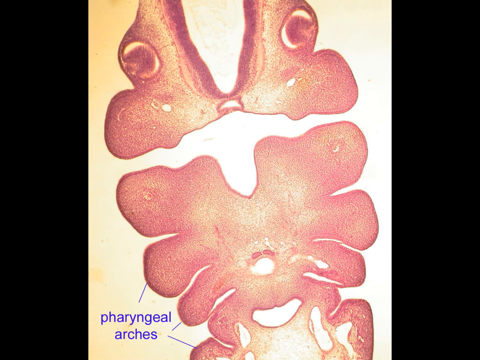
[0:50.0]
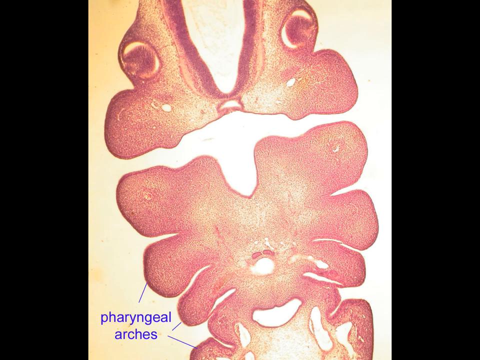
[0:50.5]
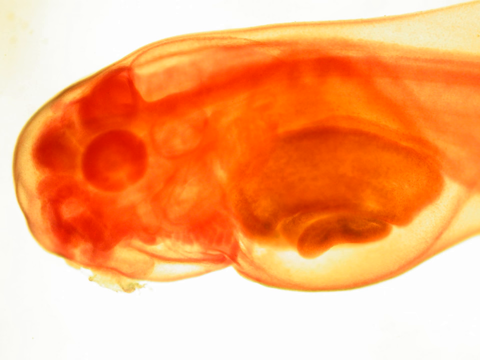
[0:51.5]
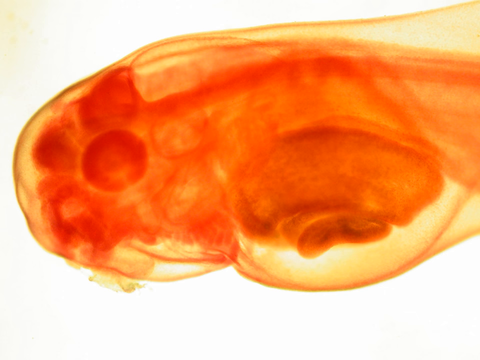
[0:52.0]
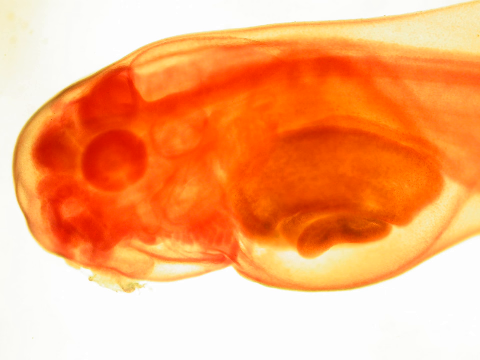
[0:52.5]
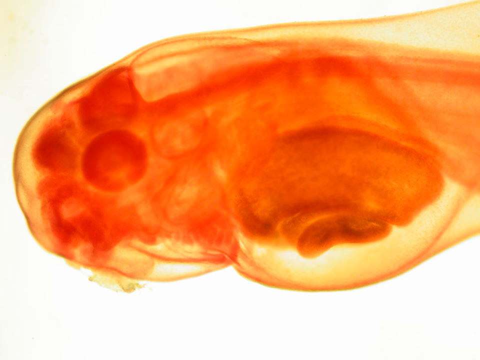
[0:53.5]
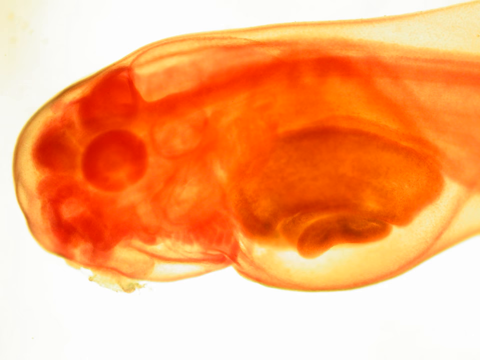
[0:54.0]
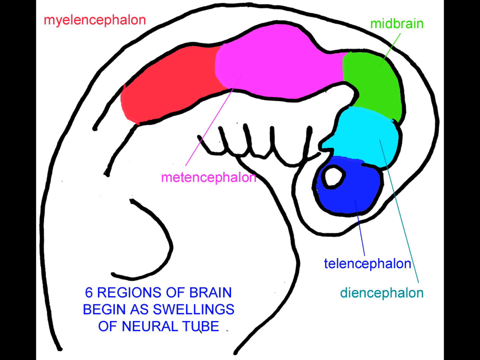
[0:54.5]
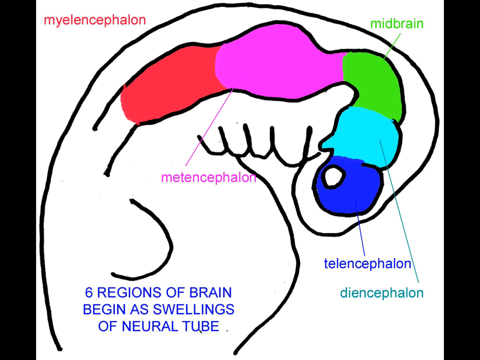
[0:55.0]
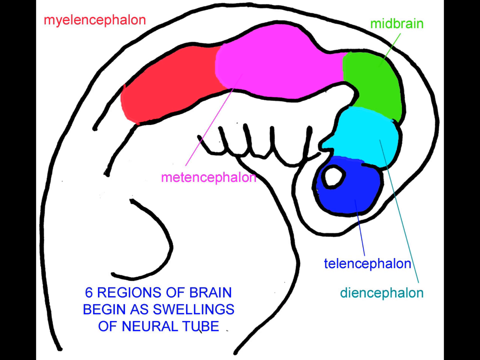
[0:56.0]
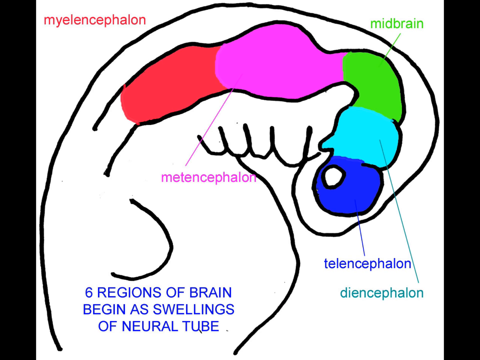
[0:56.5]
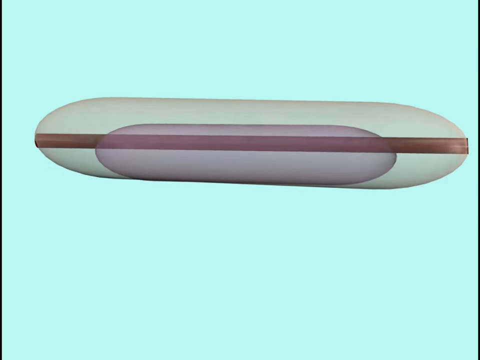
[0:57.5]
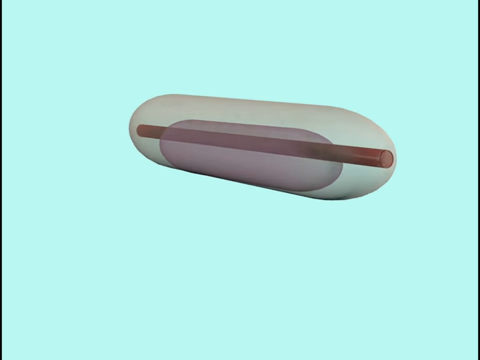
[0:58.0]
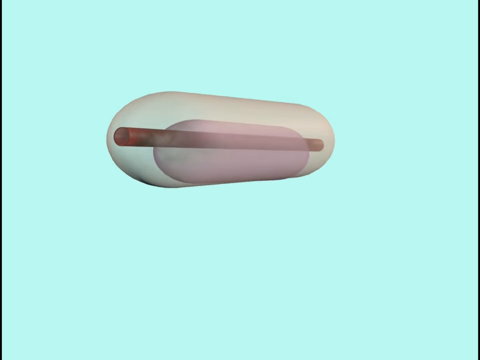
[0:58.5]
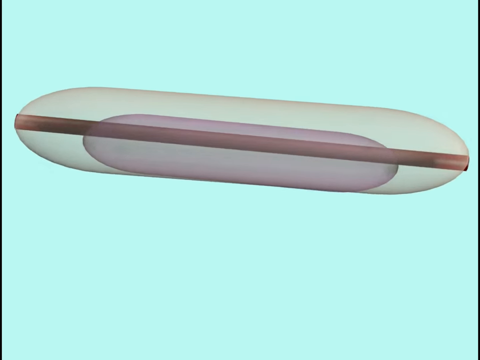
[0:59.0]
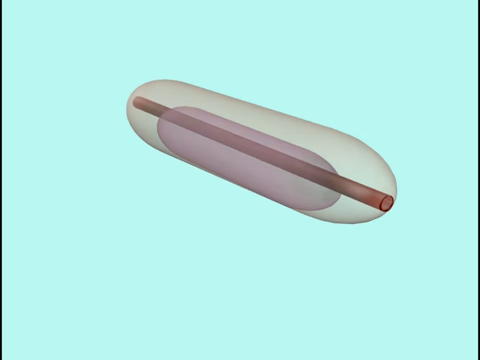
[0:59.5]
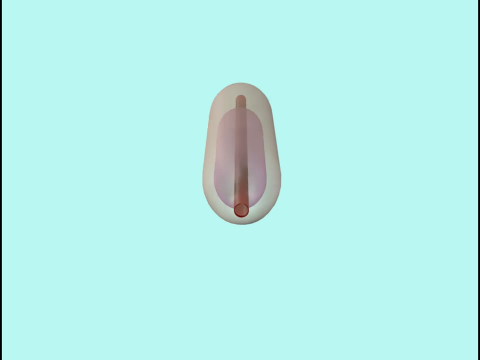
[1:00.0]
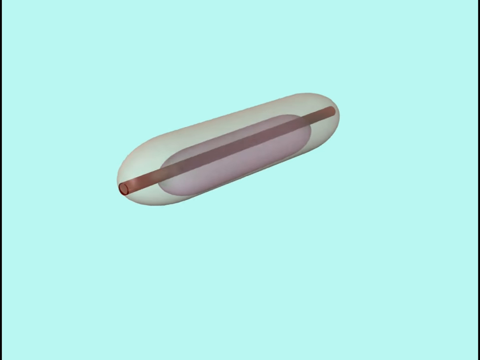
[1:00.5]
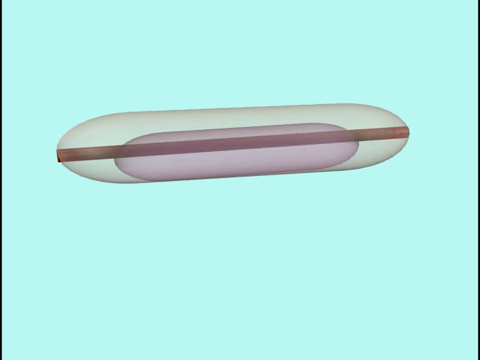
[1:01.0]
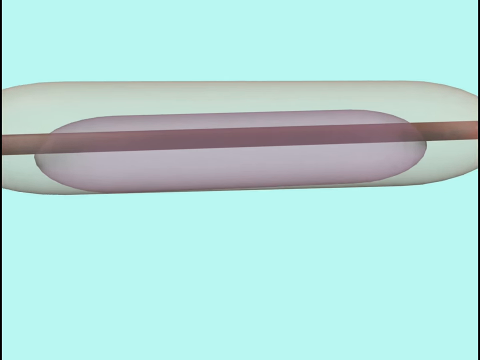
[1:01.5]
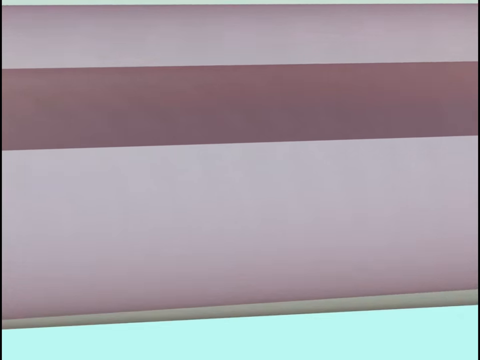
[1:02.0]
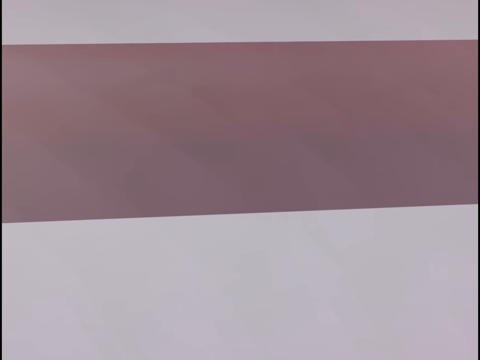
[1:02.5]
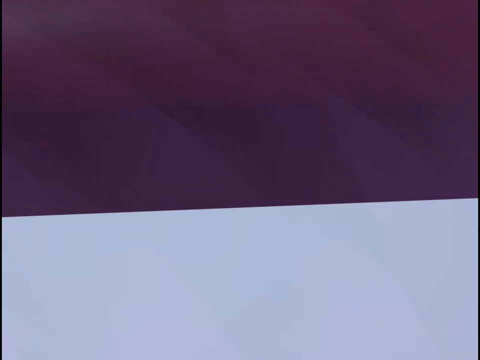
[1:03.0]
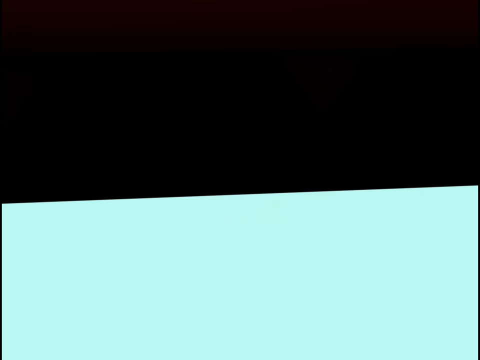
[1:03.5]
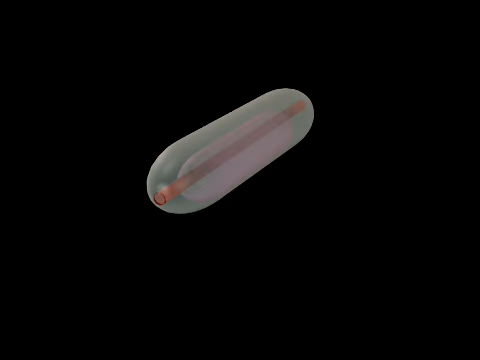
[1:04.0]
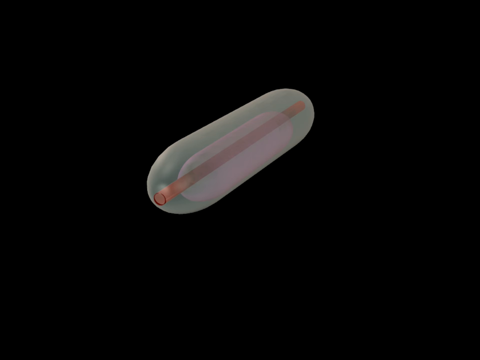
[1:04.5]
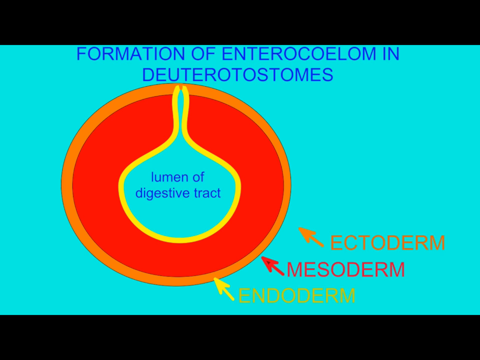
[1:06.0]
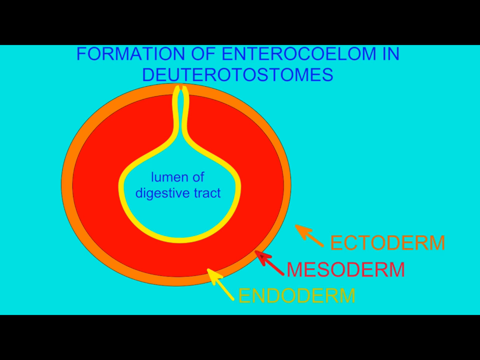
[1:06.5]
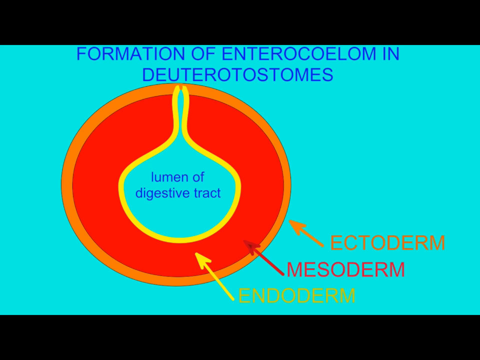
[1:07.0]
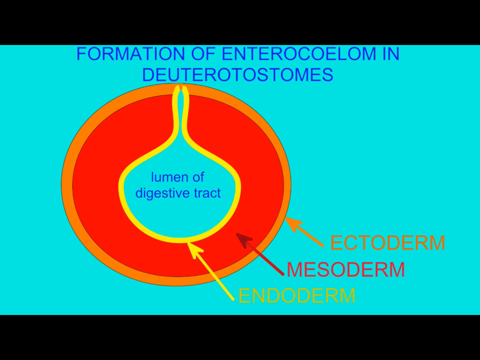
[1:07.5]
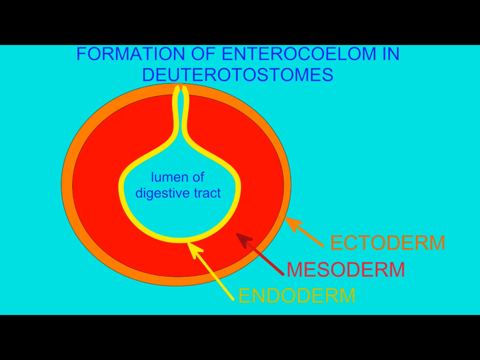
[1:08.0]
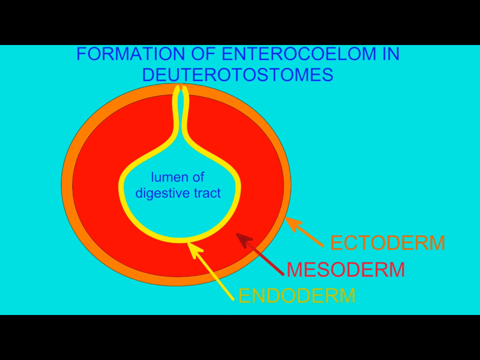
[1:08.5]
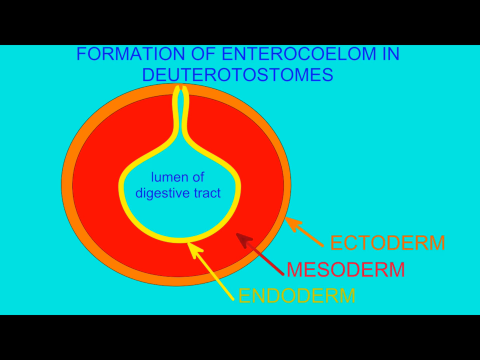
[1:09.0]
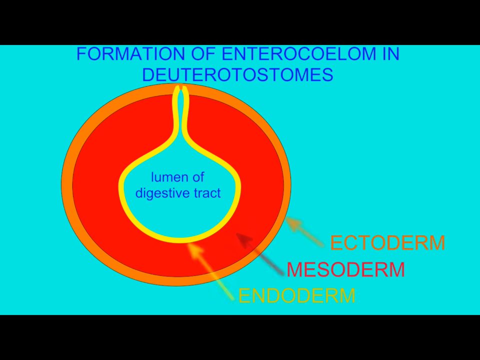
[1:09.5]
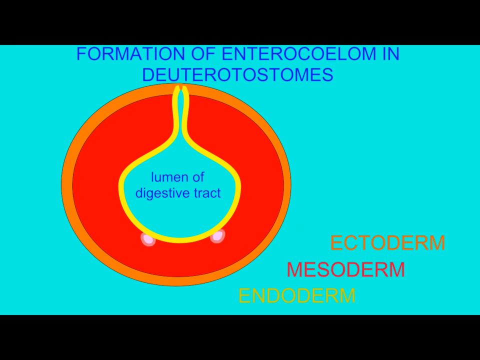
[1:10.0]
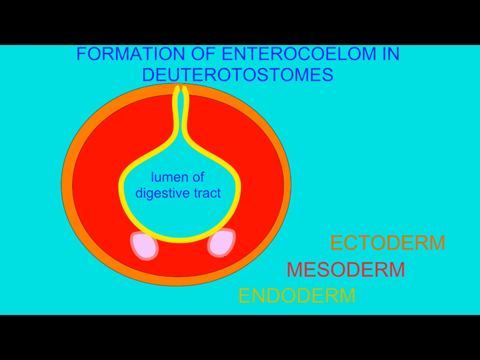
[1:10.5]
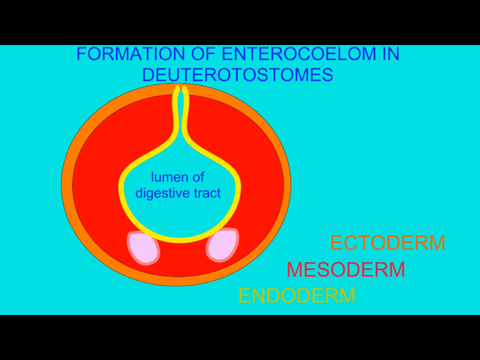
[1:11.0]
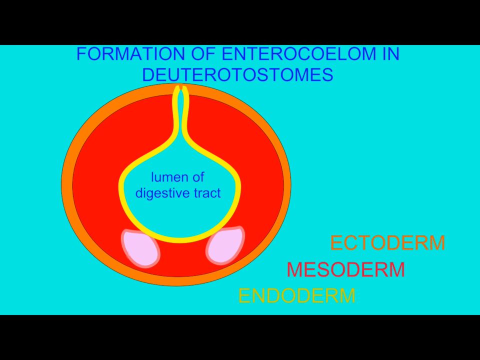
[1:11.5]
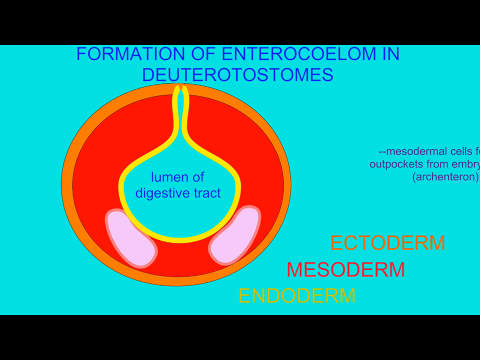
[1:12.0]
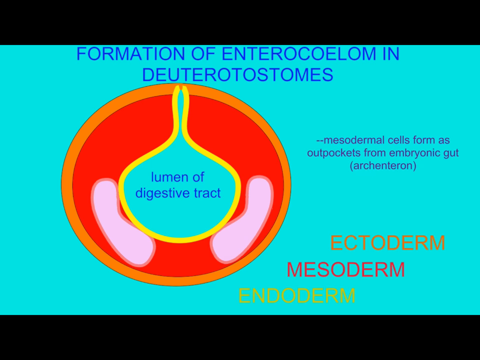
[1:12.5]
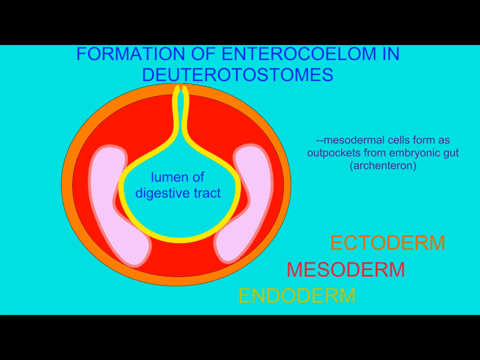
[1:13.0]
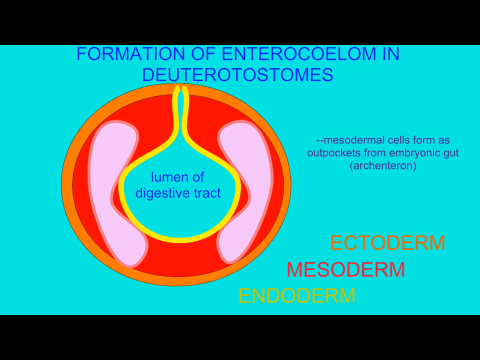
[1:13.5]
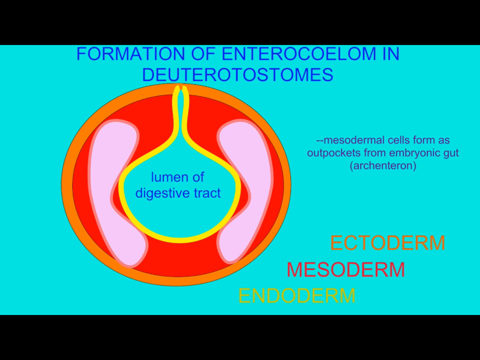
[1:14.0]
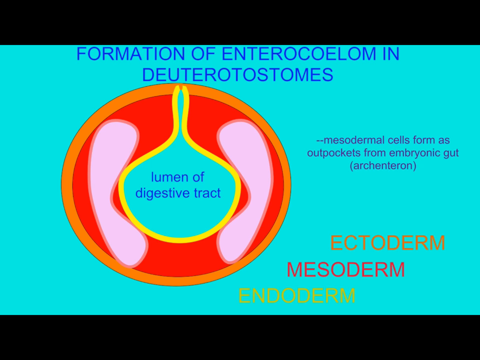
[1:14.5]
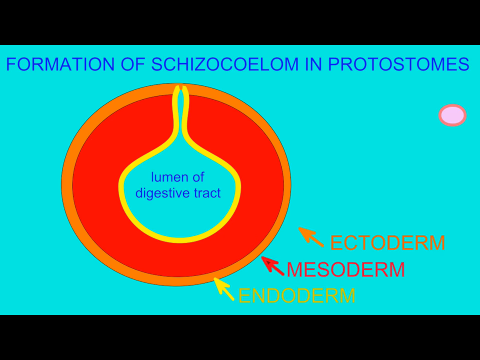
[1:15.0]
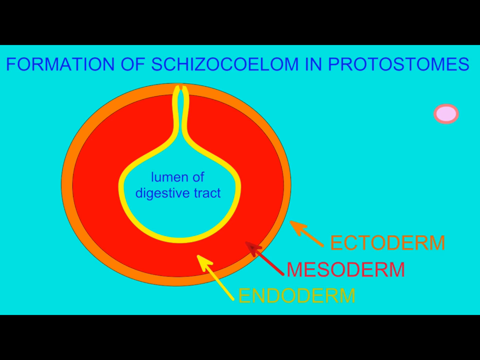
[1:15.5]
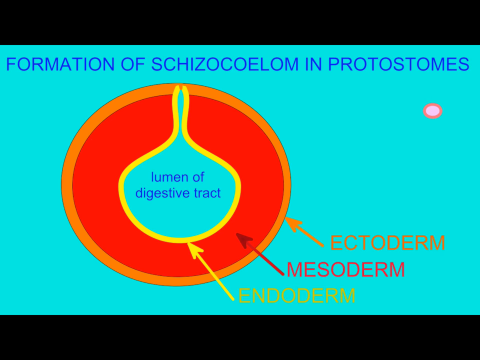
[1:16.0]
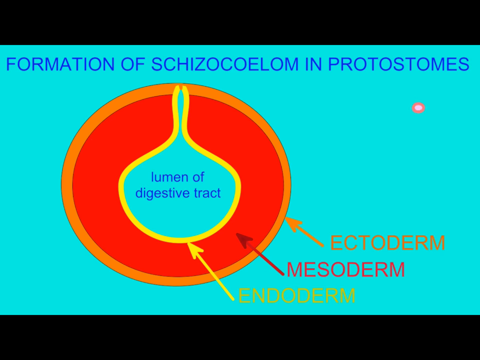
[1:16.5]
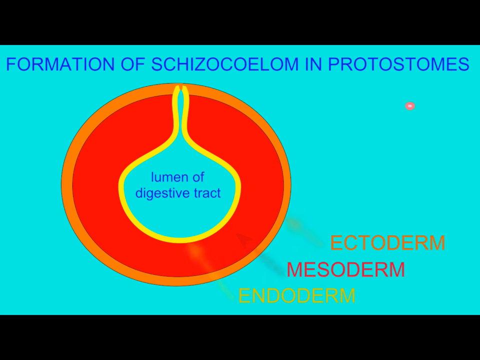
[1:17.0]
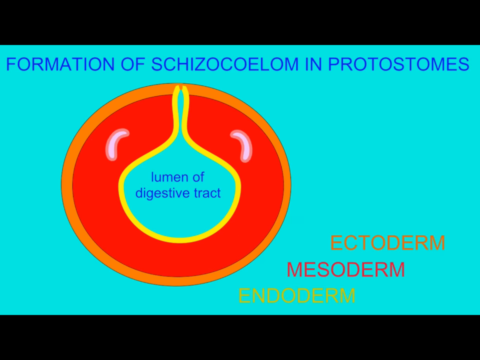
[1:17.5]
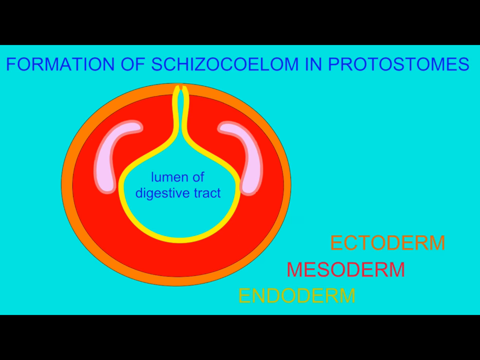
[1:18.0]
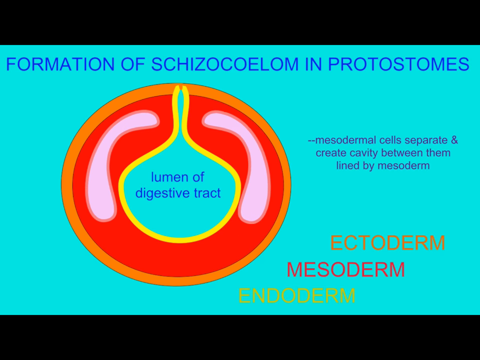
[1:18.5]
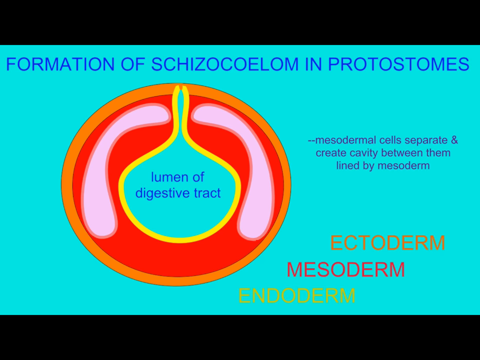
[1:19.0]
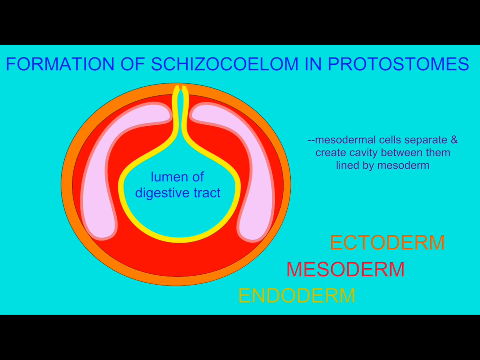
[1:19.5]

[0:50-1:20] A structure is shown under a microscope on a white background; it kind of looks like an insect or crustacean, maybe a cockroach. It switches to something that looks like a small fish's head on a white background, with the eye on the left side of the screen; it is orange and yellow. Next, a white screen shows a drawing of an embryo with a blue head and light blue underneath that. The blue head is on the right side of the screen, facing toward the bottom. The body goes up and turns green, then curves to the left of the screen, turning pink and then orange. There is a lot of writing on the screen. Then a computer-rendered image shows a see-through, tubular object rounded at each end, lying horizontally across the screen, with what looks like a tube running inside it; it spins around the screen. It gets really close to the screen, then the screen turns black and shows the tubular object, which sort of looks like a blown-up condom with a white tube, or possibly a brown tube, running through its center and pink outlining. It switches to a blue screen with the text "formation of ENTEROCOELOM", along with "lumen of digestive tract" and an illustration of it. Two pink things come out and go around it, and words come in from the right side of the screen.